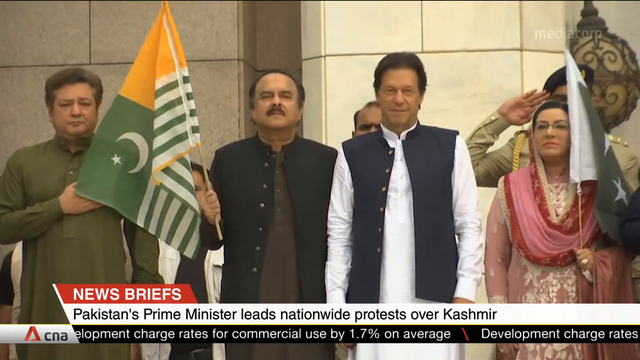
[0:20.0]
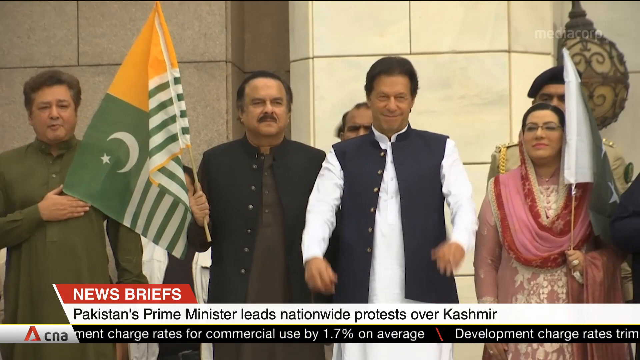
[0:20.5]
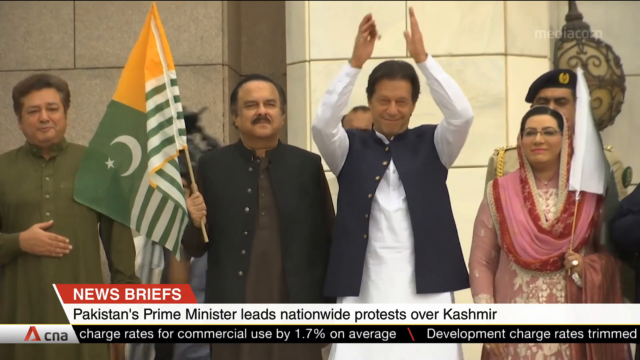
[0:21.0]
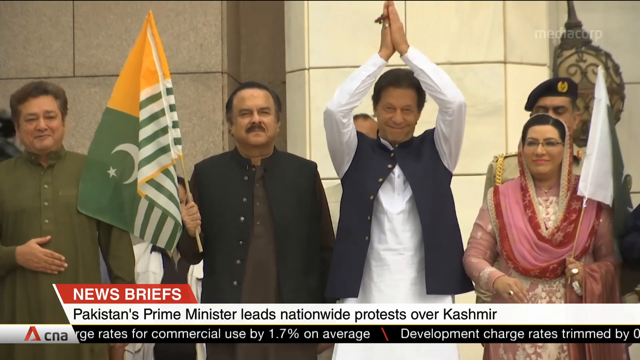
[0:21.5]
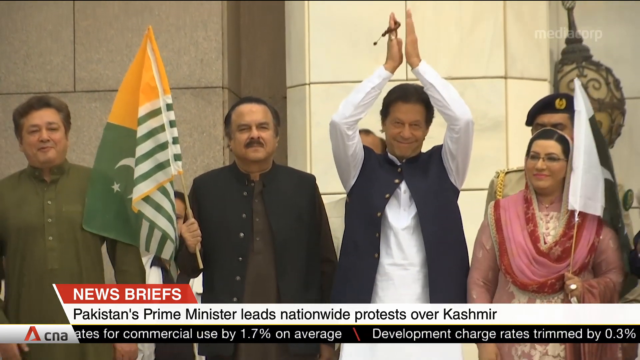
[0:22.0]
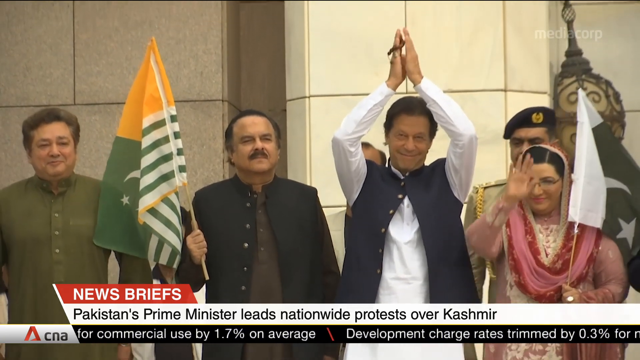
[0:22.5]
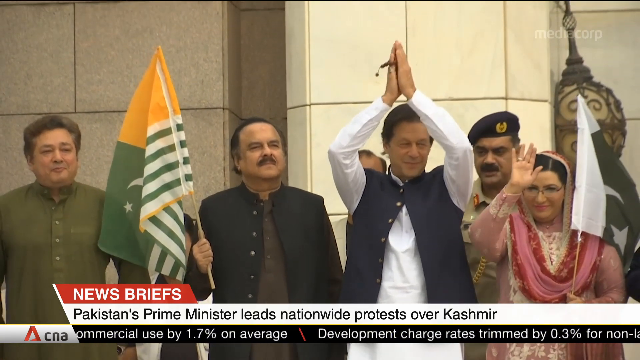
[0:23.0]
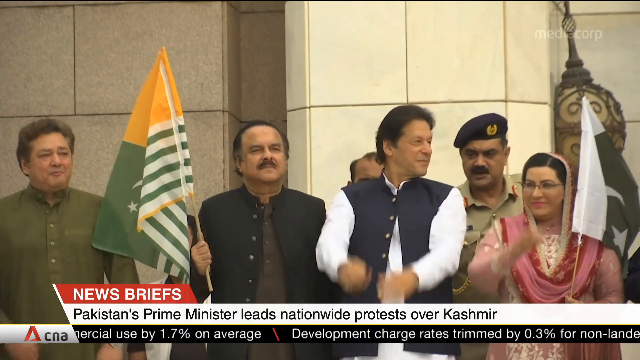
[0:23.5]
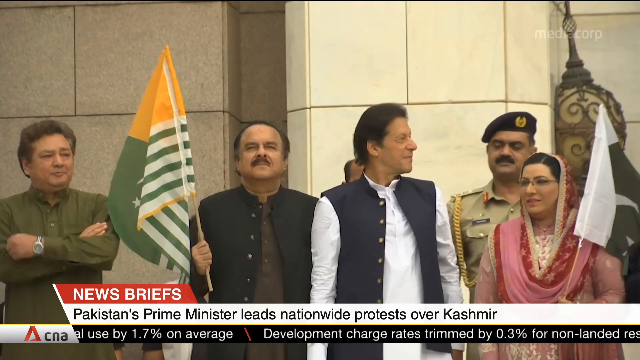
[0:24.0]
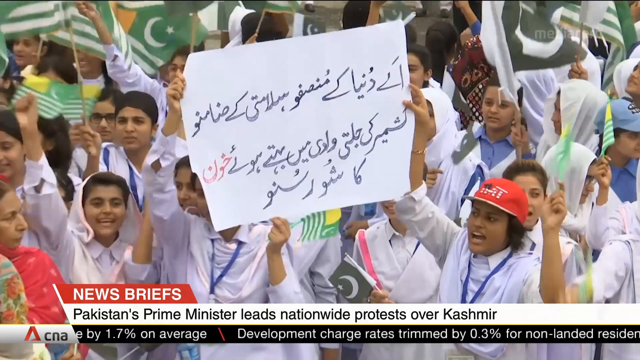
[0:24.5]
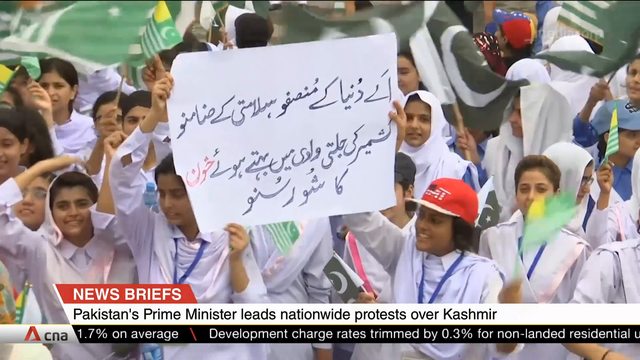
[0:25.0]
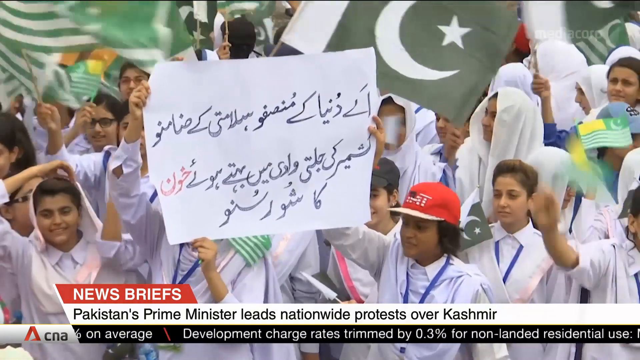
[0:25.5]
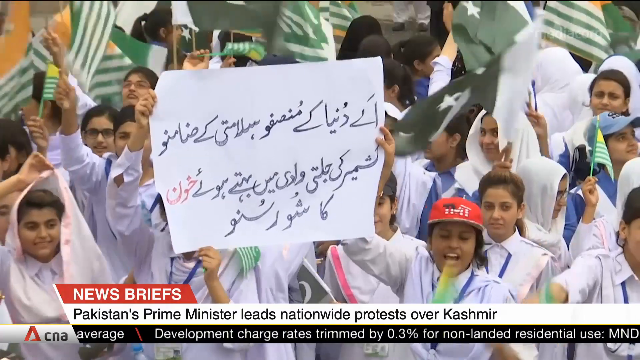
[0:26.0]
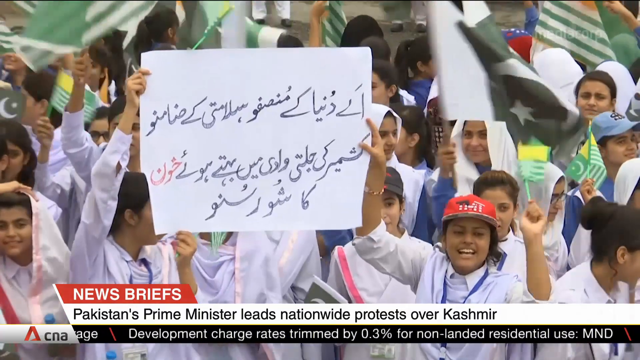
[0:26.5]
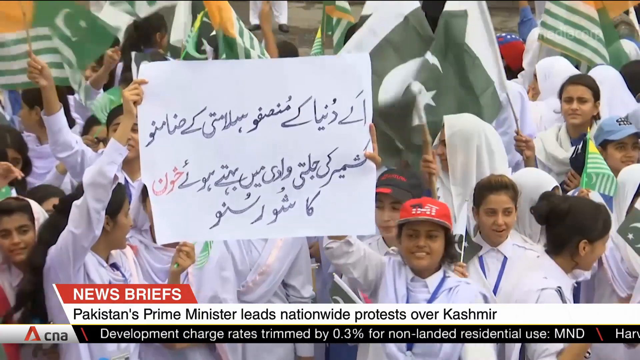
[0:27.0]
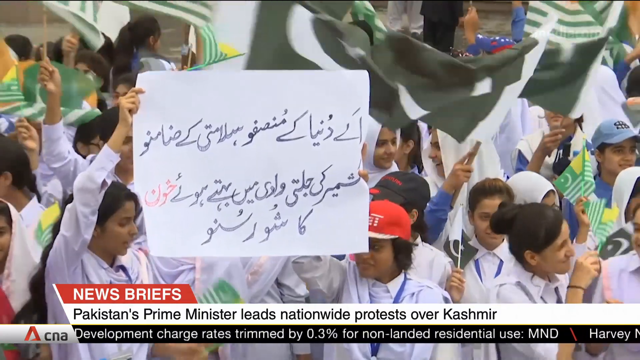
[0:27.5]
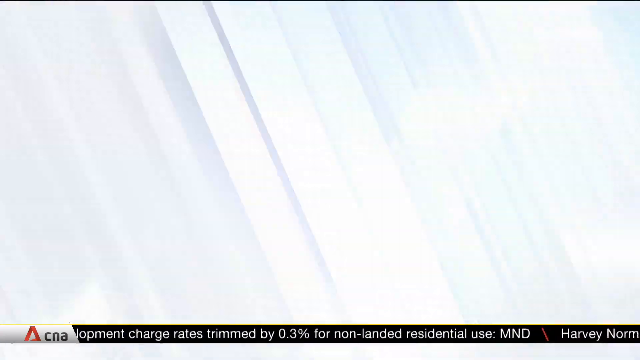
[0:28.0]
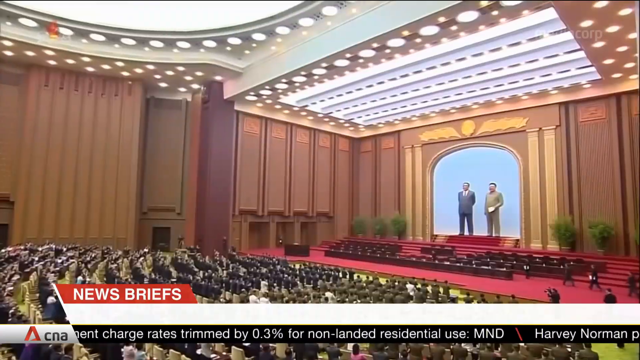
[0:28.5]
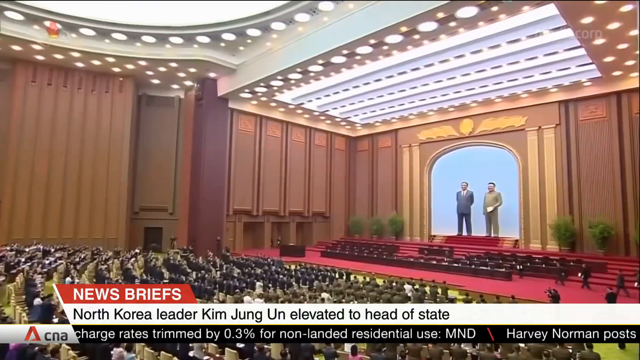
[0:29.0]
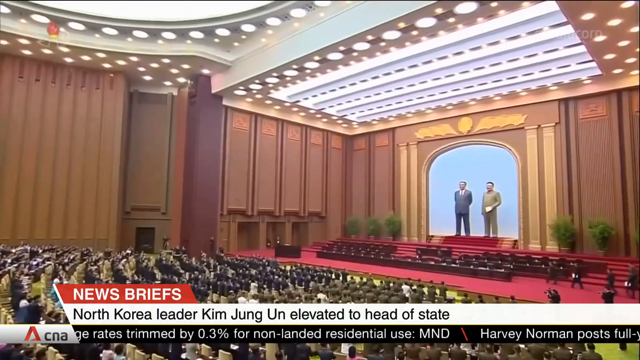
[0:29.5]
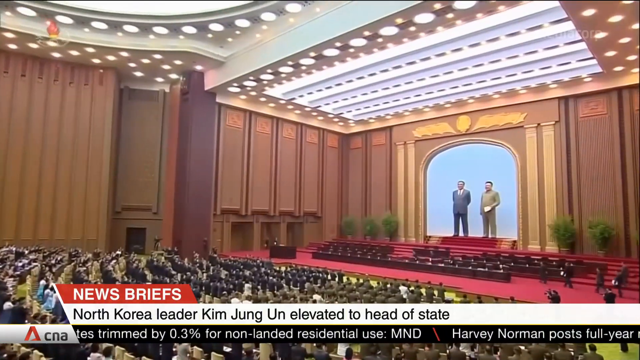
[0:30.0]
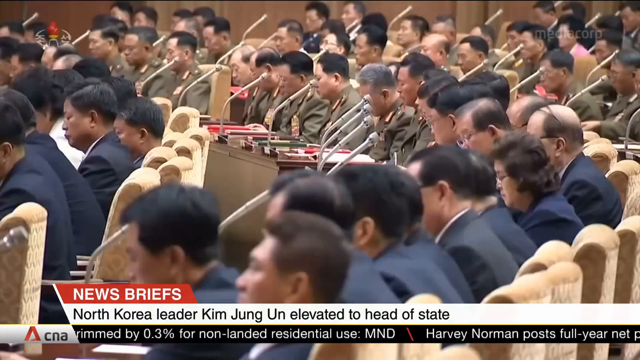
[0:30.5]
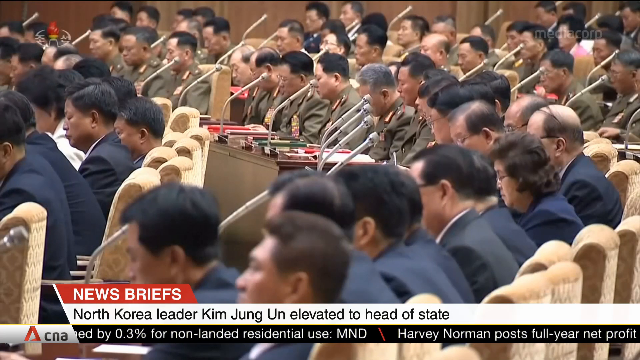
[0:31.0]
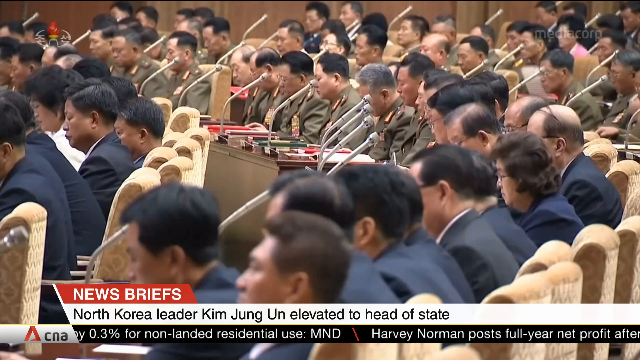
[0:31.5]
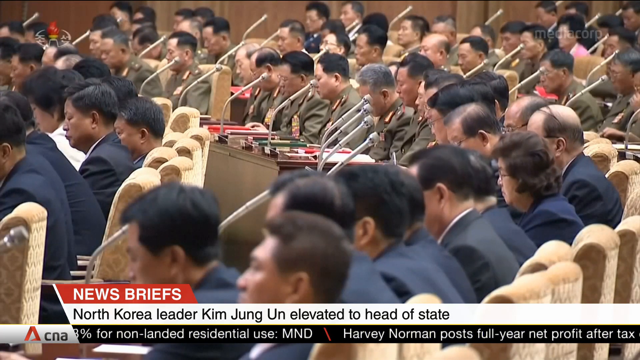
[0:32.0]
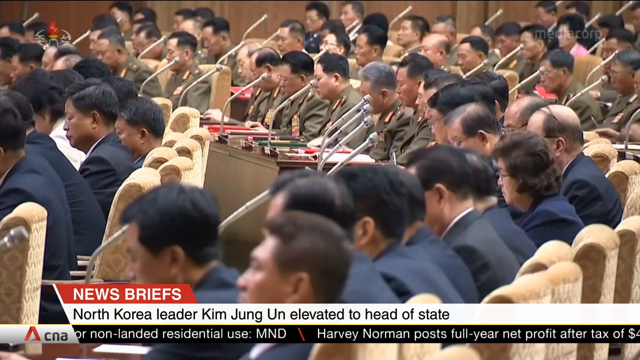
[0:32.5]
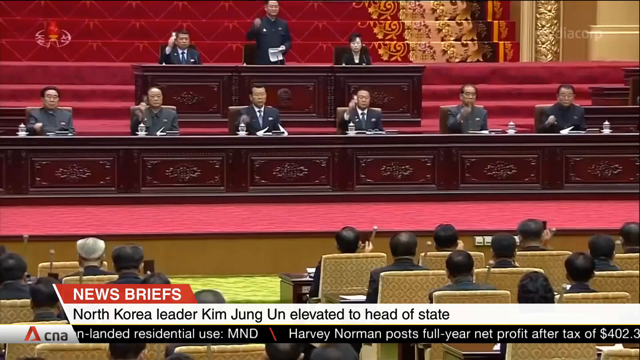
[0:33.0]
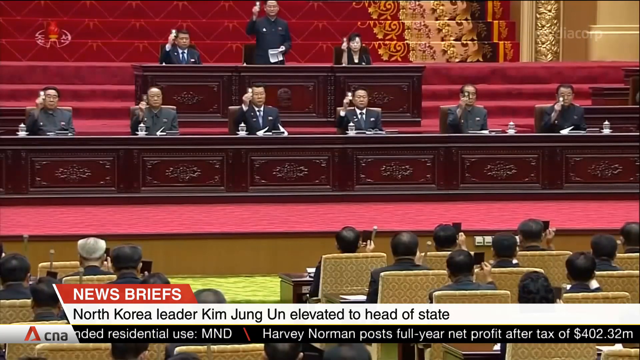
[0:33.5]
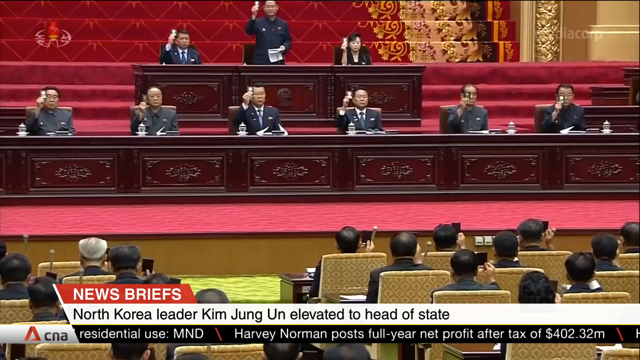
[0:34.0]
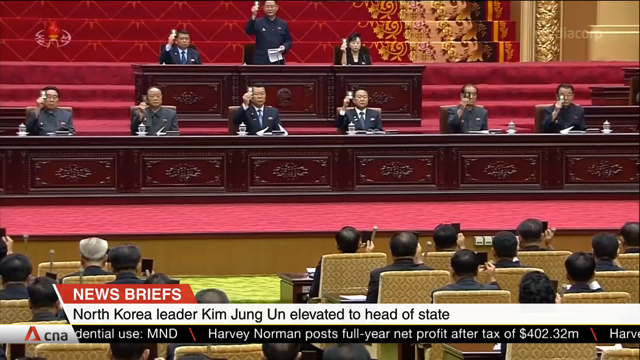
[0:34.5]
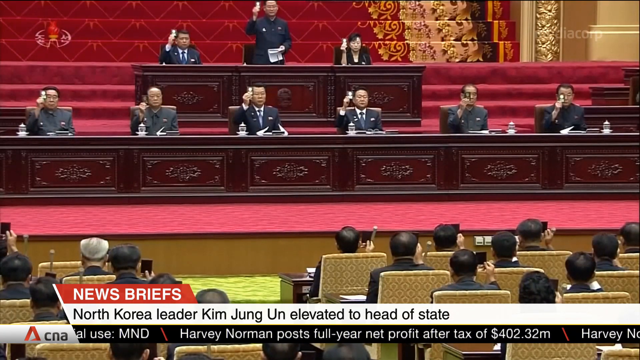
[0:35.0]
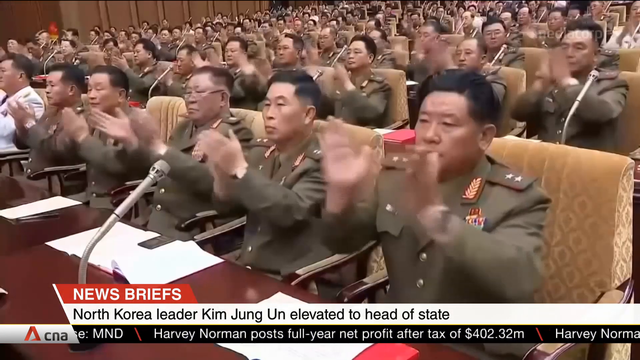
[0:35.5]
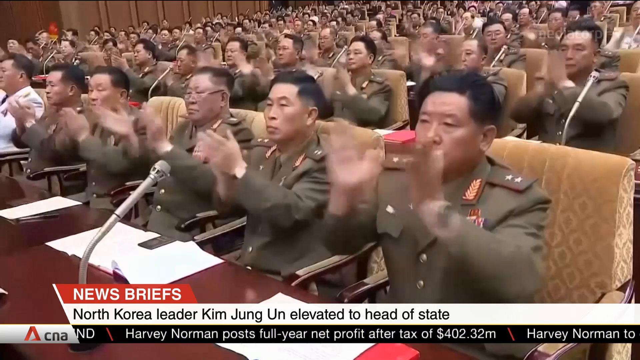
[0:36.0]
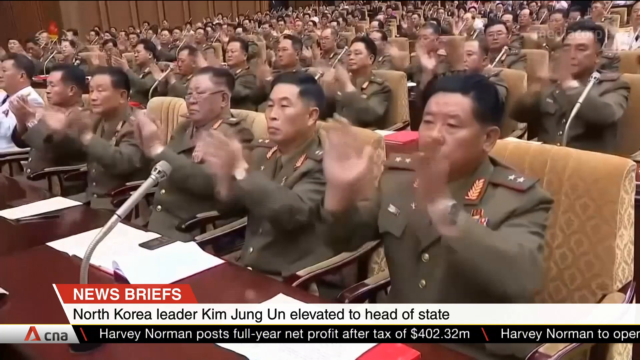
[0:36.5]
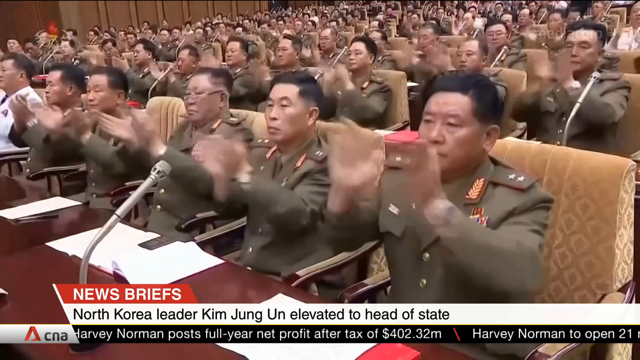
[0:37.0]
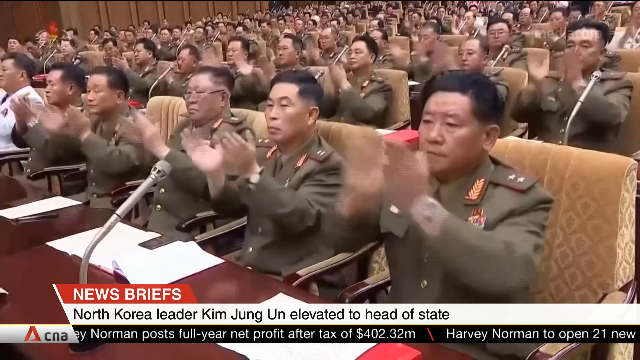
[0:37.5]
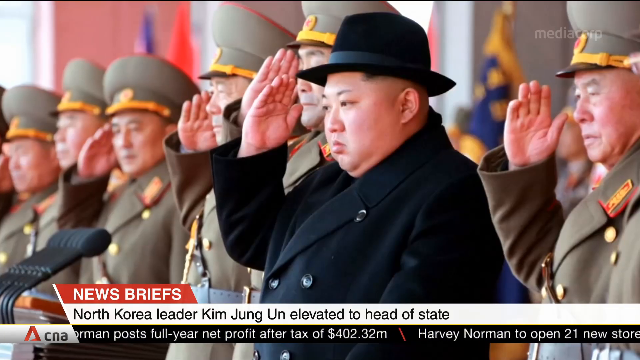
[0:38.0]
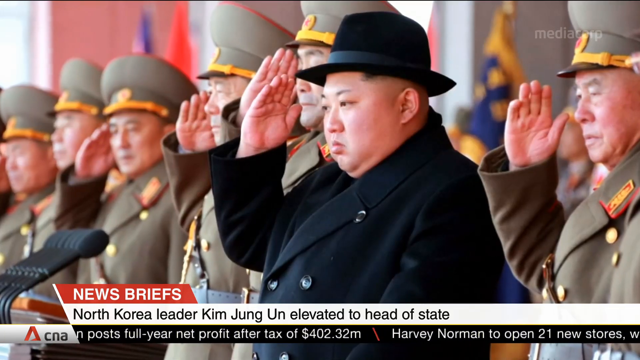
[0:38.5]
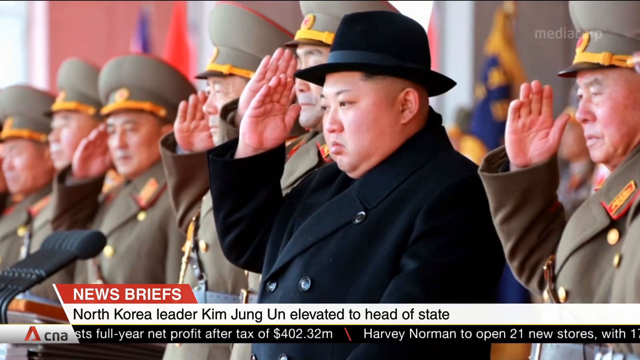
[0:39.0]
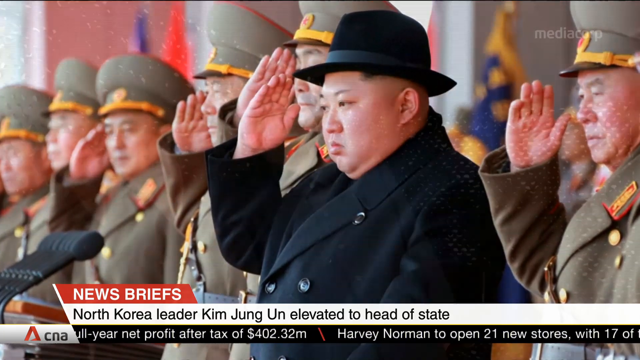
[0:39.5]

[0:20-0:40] More people are shown protesting. The prime minister is apparently the man in black and white clapping with his arms up. A woman to his left wears pink and red and also has a flag. People hold up a flag that apparently has text on it. The scene then moves inside a building, with the text "news briefs North Korea leader Kim Jong-un elevated to head of state." A crowd of soldiers claps, all seemingly clapping in the same way, lifting up their arms to clap. Pictures follow of Kim Jong-un saluting with his right hand and wearing a black hat.